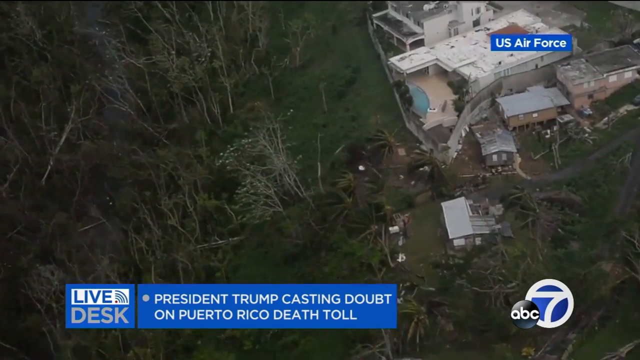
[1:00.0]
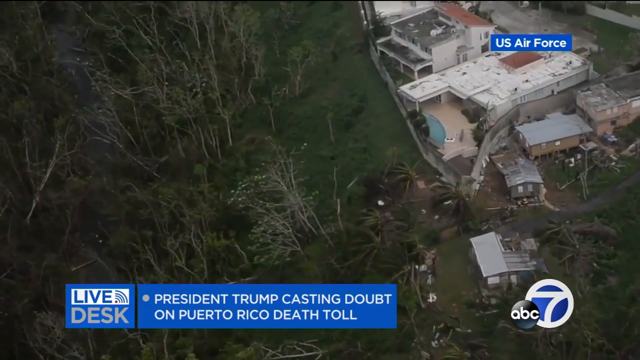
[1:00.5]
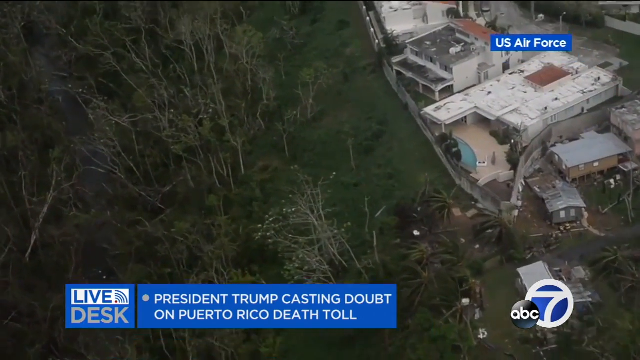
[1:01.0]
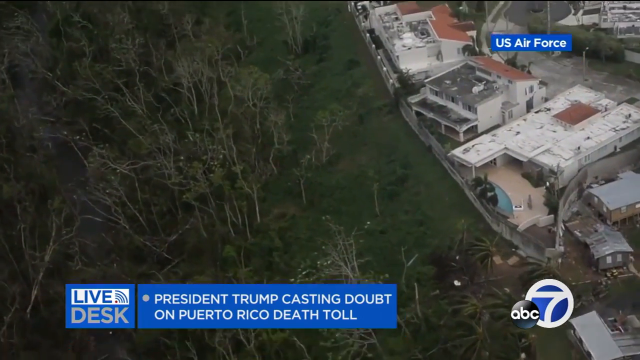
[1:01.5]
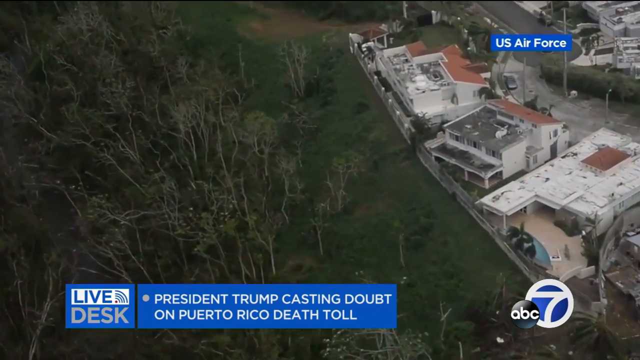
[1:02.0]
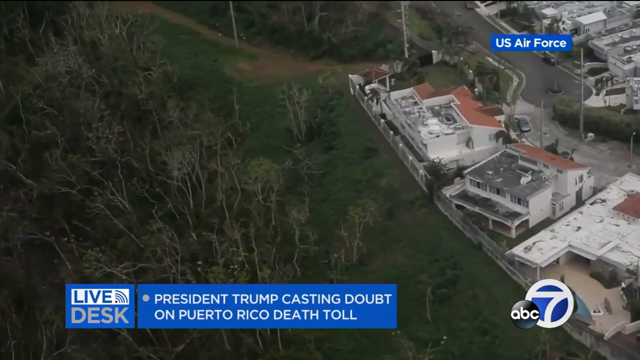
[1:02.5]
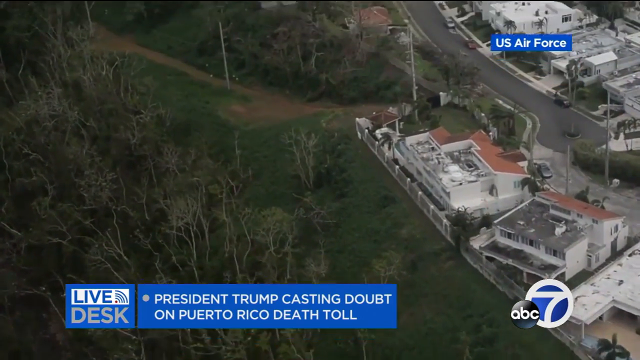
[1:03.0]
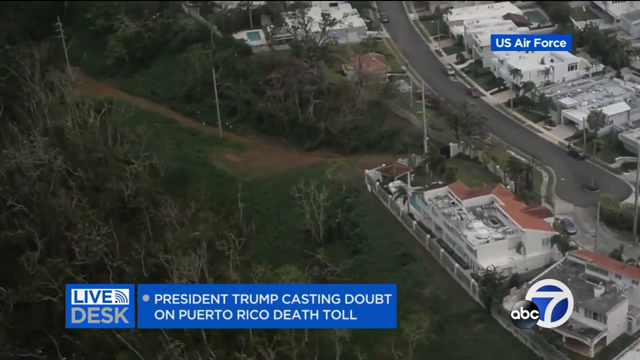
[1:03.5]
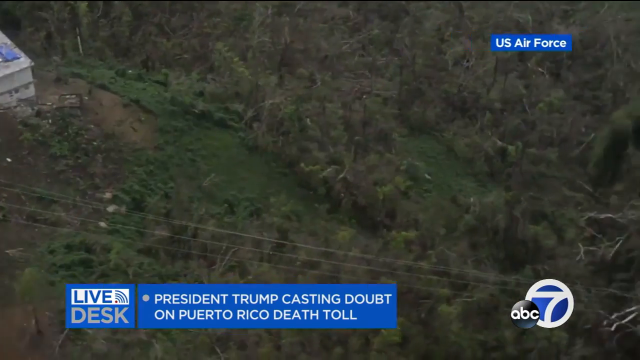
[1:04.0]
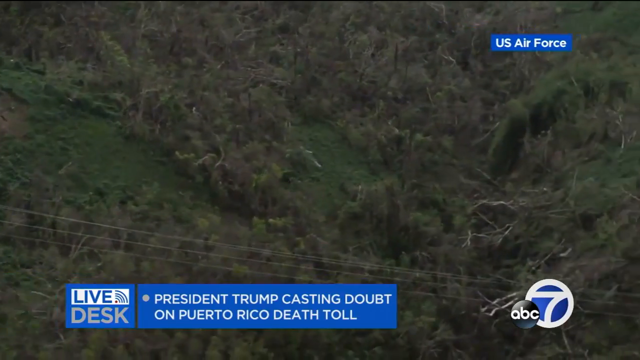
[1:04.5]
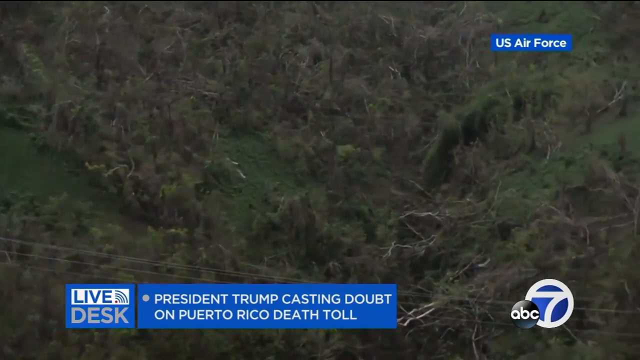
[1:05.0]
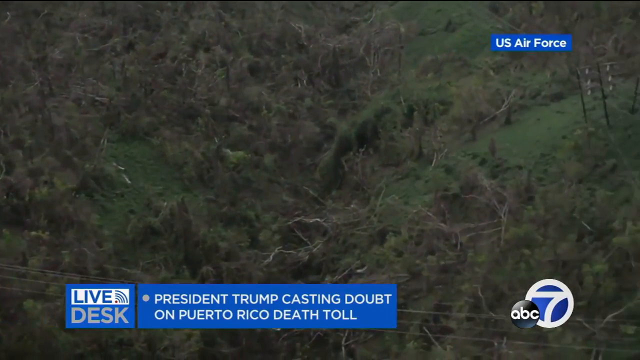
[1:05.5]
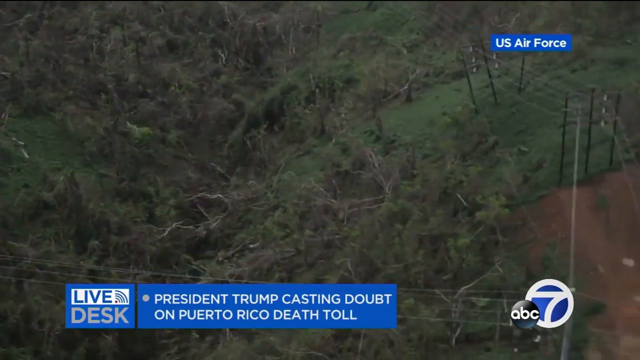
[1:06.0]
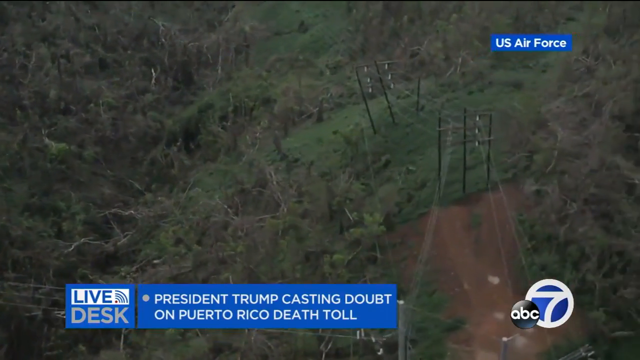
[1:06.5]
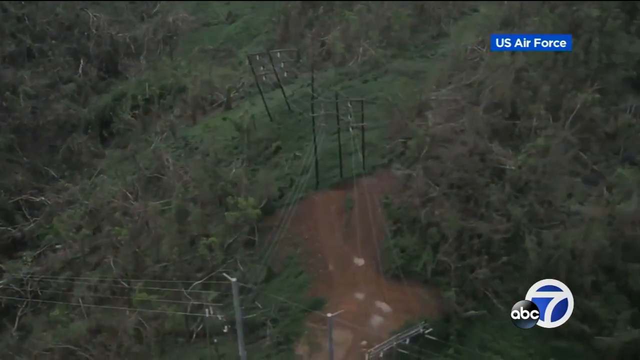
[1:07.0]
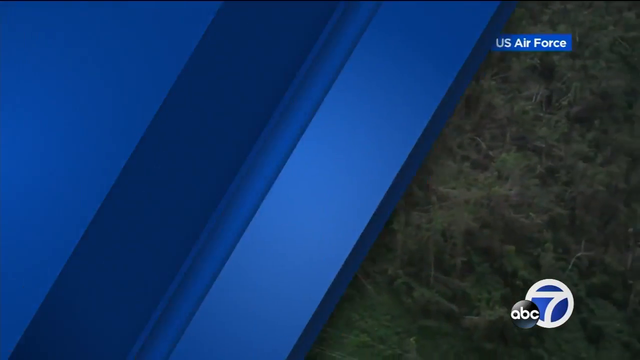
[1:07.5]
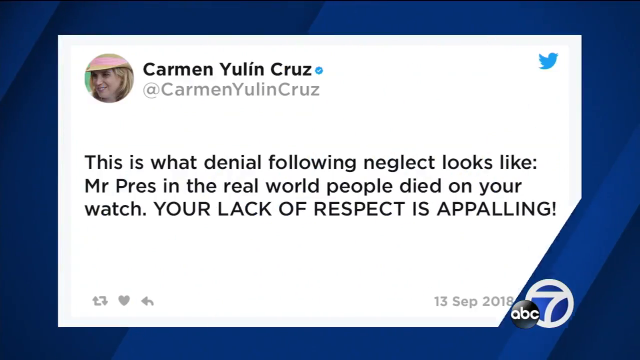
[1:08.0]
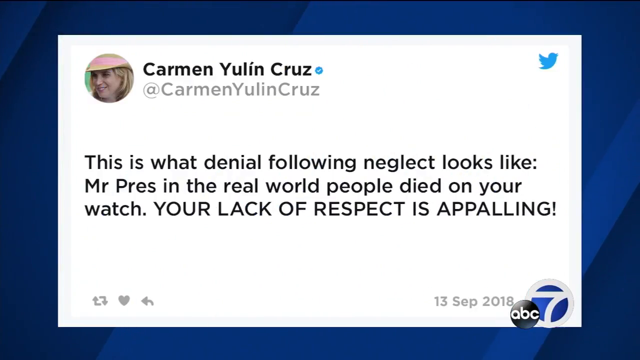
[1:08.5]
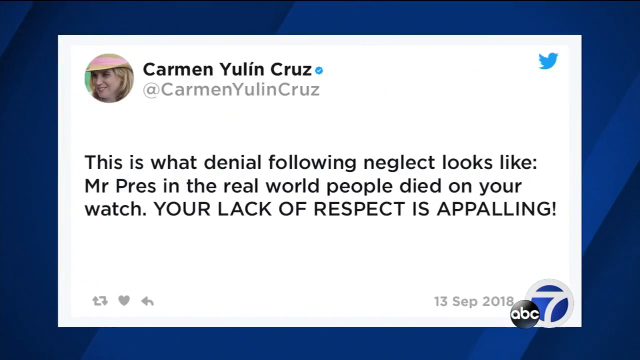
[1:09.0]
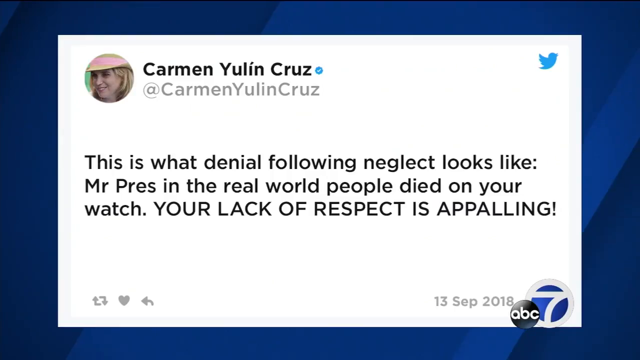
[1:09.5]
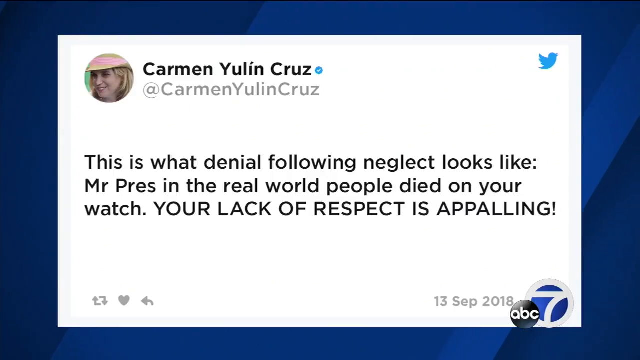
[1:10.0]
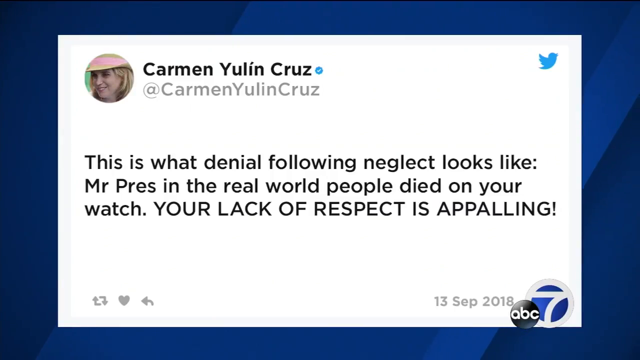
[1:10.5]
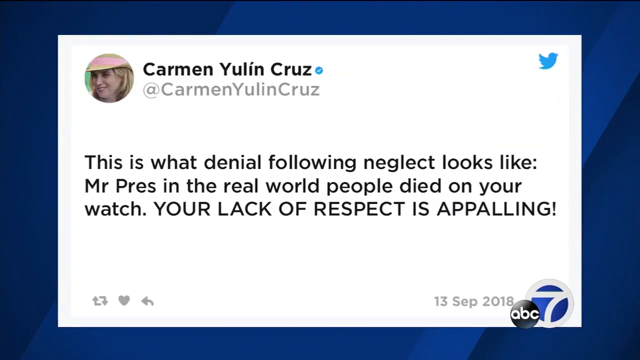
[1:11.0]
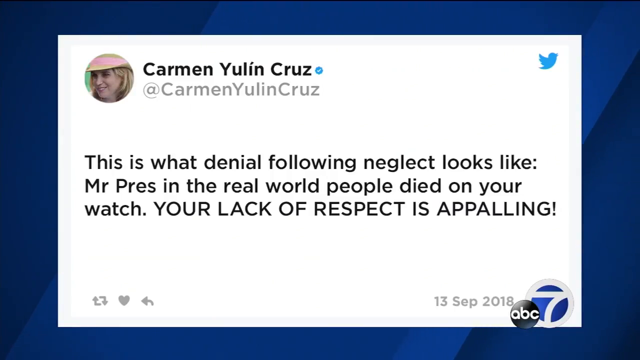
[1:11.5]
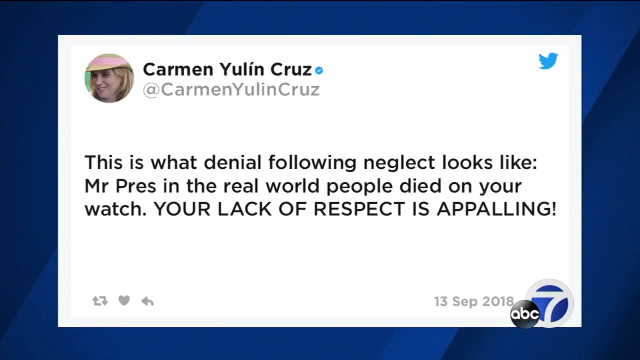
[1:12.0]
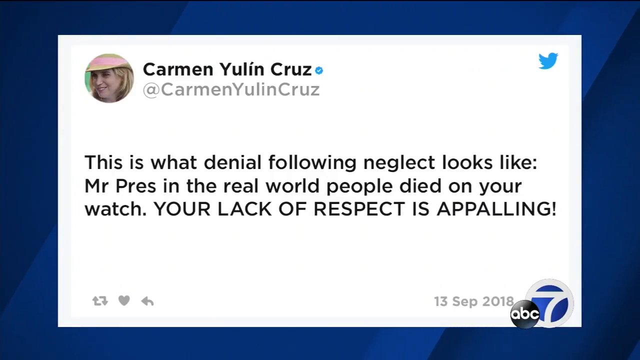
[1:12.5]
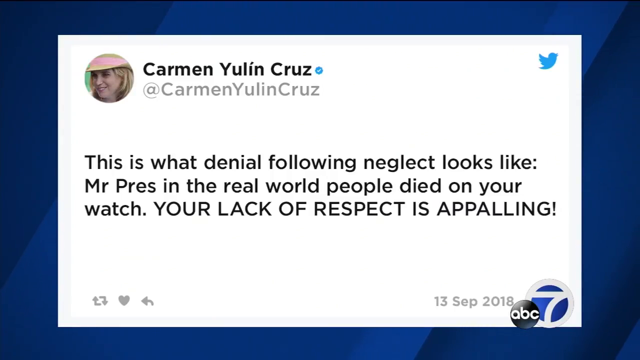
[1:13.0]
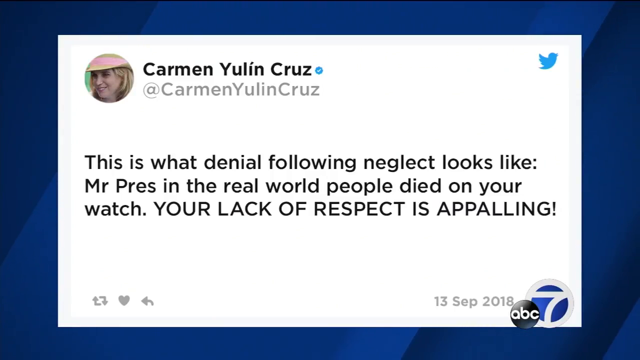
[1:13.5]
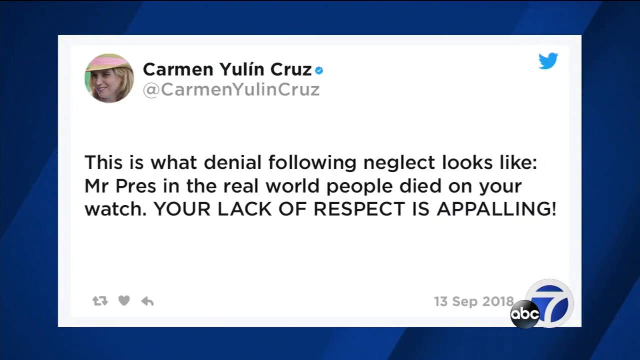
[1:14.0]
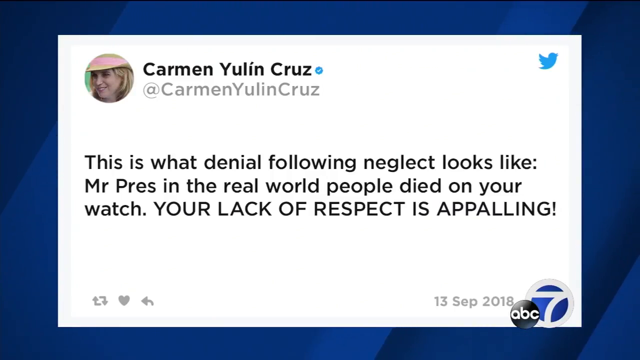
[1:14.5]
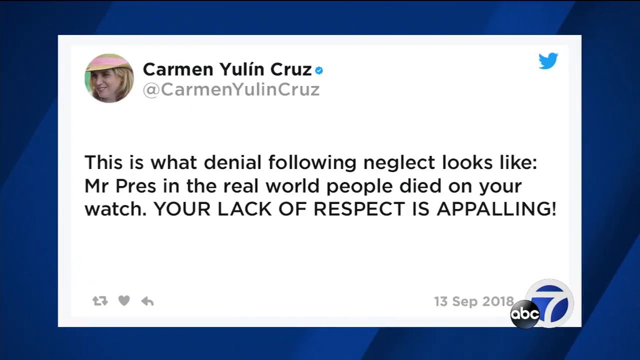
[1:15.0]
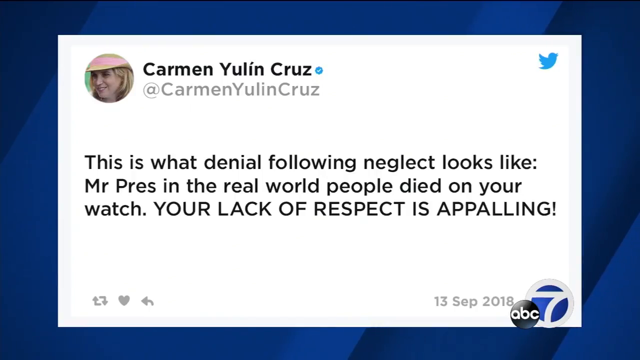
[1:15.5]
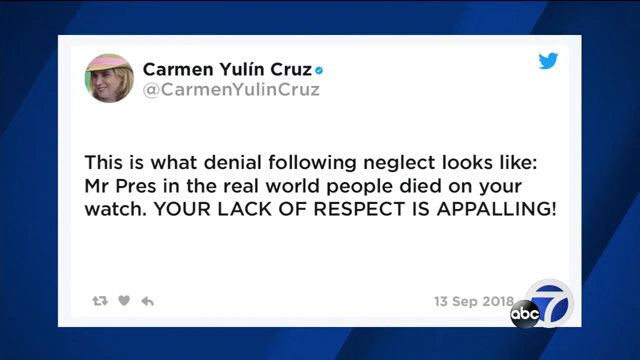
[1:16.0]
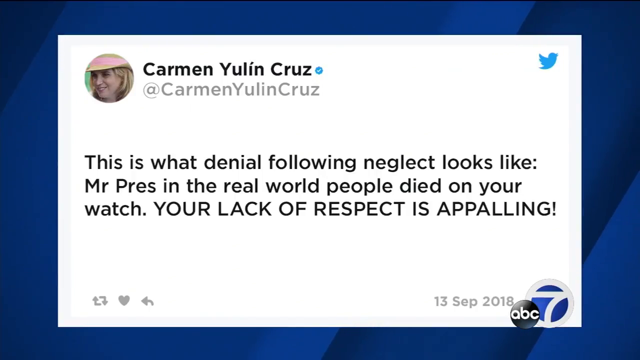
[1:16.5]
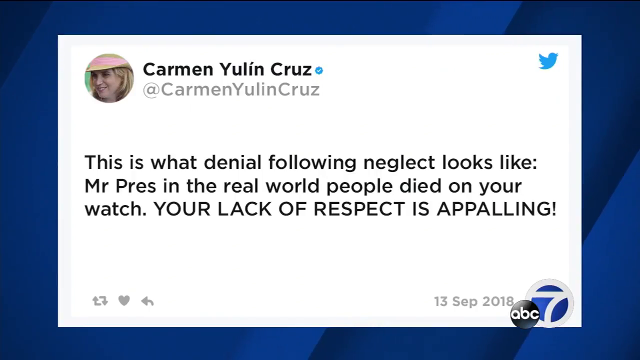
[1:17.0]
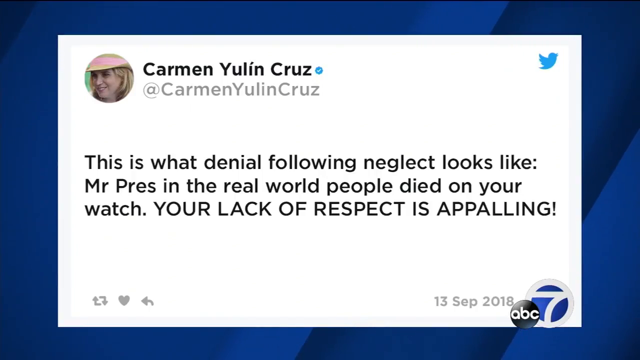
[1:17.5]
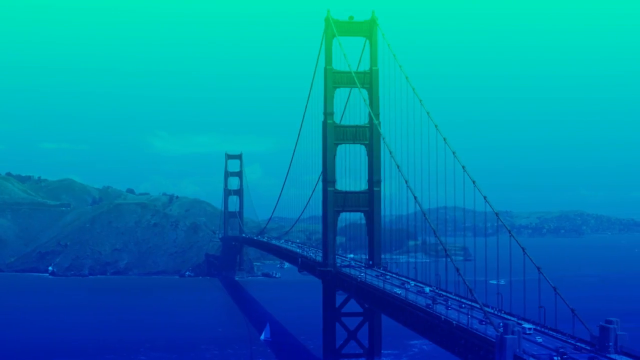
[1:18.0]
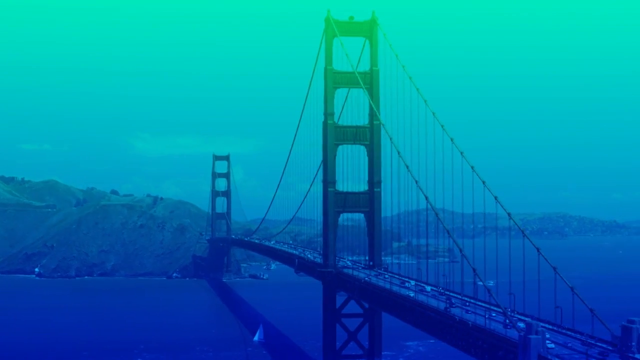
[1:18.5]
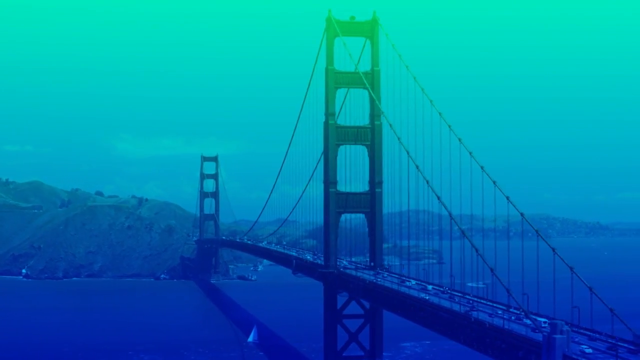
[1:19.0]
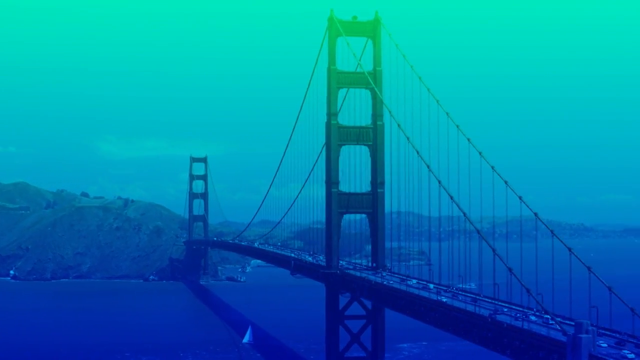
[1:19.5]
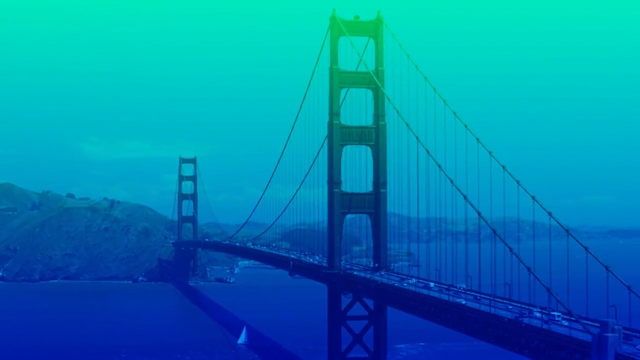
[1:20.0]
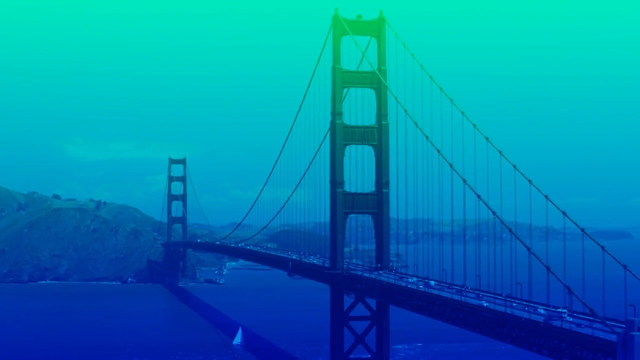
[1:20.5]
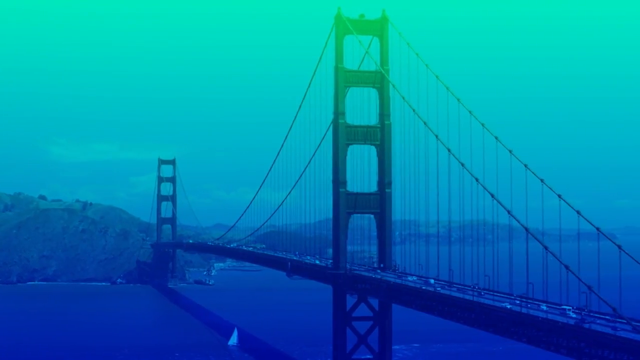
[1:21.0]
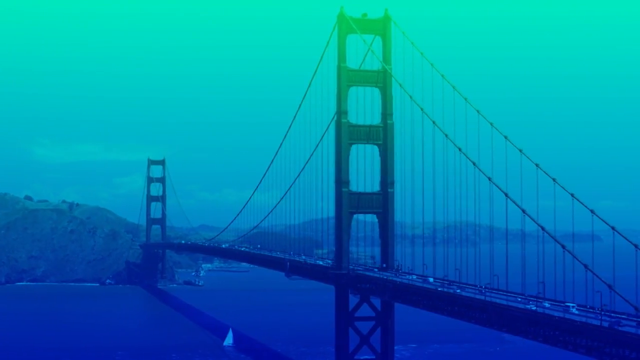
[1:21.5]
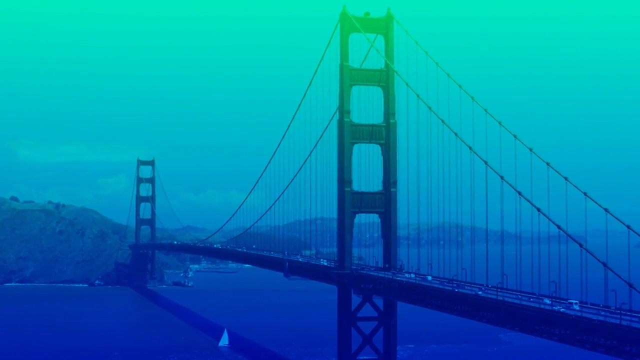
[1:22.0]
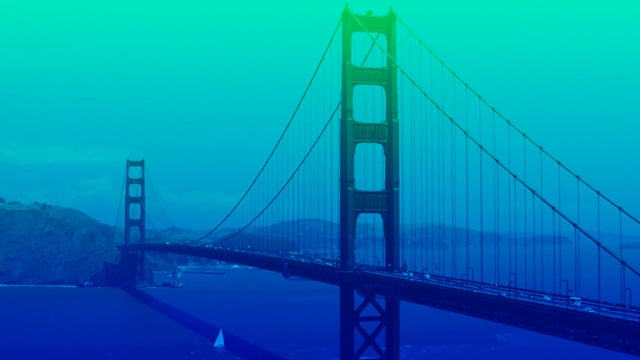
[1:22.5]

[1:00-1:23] The panning aerial footage continues, with "US Air Force" on a blue background at the top right. The camera keeps shaking and panning up and to the left, showing more buildings. It cuts to a different view that pans rapidly right over a forested area and then shows a long line of two power lines. A scrolling blue transition comes in from the right side of the screen, and another tweet appears on the same blue background, apparently from a person named Carmen Yulin Cruz. It reads: "This is what denial following neglect looks like. Mr. Prez, in the real world, people died on your watch. Your lack of respect is appalling." The last sentence is in all caps. After a few moments, the video transitions to a very blue-shaded view of what appears to be the Golden Gate Bridge. The camera is roughly level with the bridge but appears to be aerial, rotating to the right while scrolling to the left. There is a lot of traffic on the bridge, and at the top of the image a glare of sunlight is just visible over the bridge's archways.